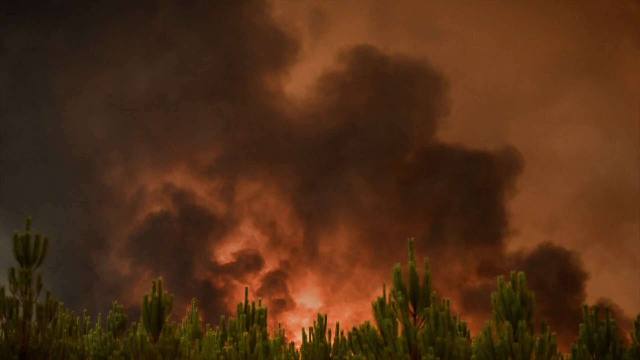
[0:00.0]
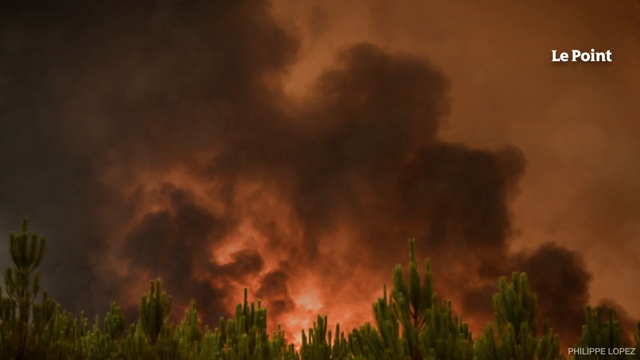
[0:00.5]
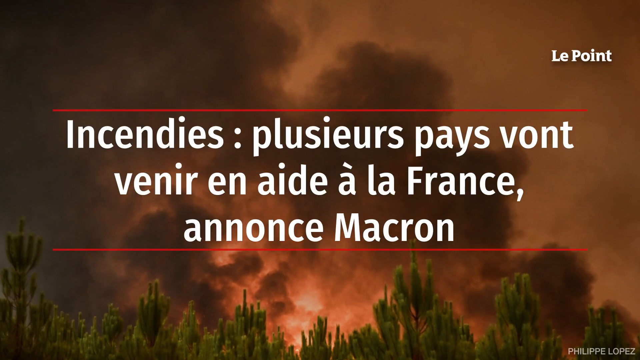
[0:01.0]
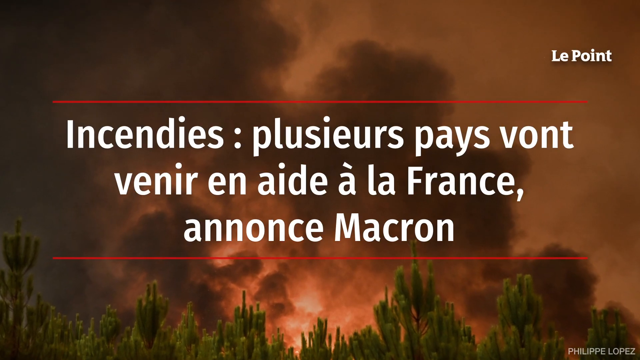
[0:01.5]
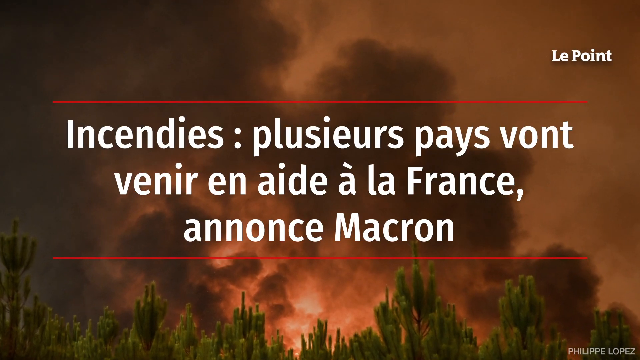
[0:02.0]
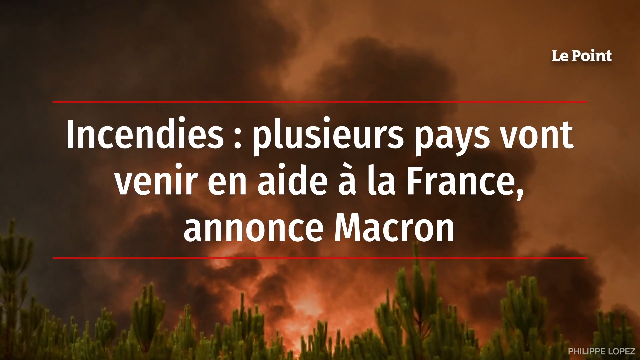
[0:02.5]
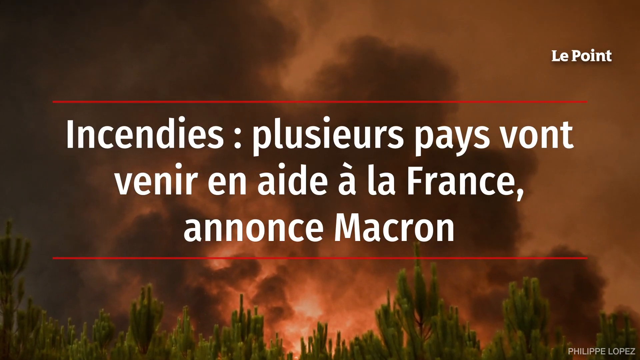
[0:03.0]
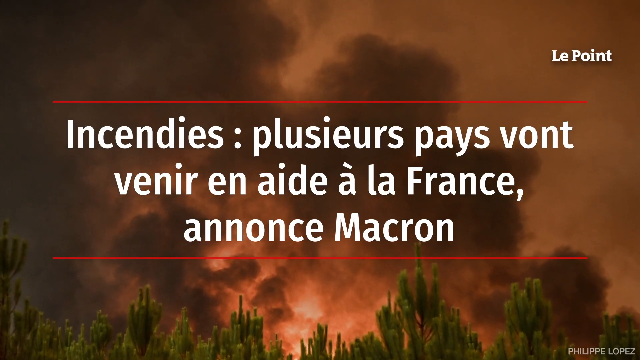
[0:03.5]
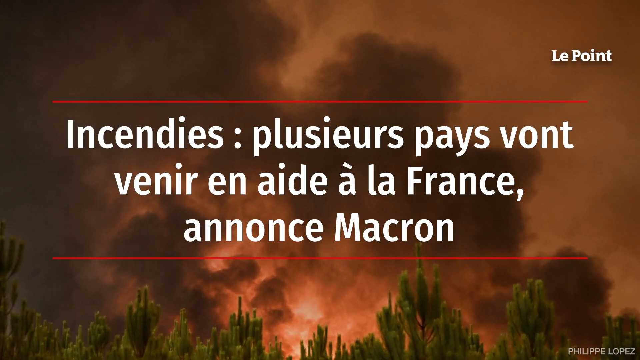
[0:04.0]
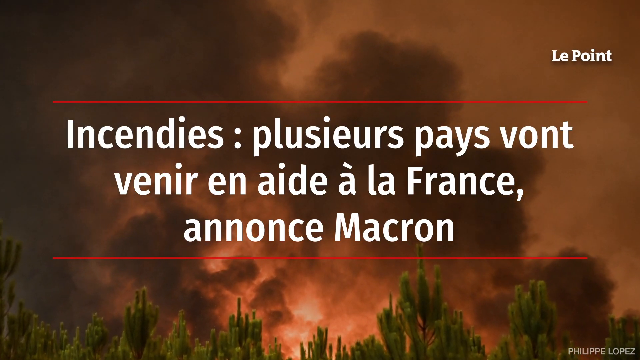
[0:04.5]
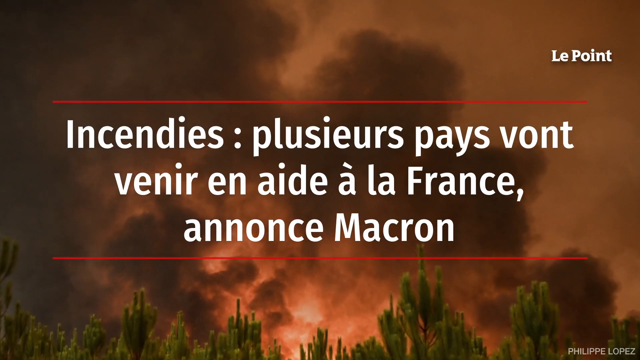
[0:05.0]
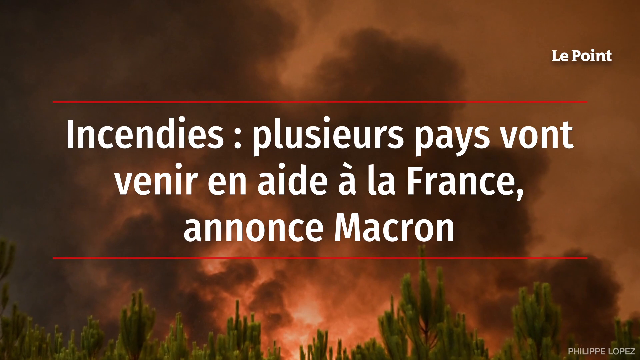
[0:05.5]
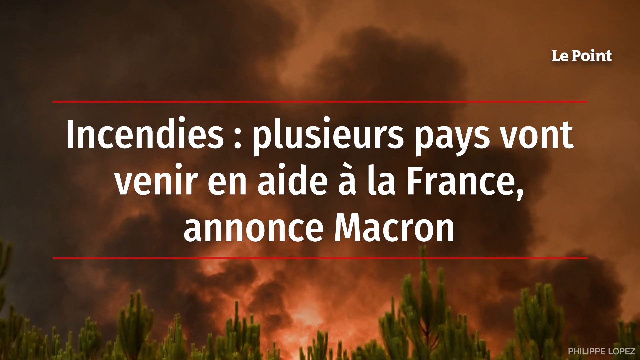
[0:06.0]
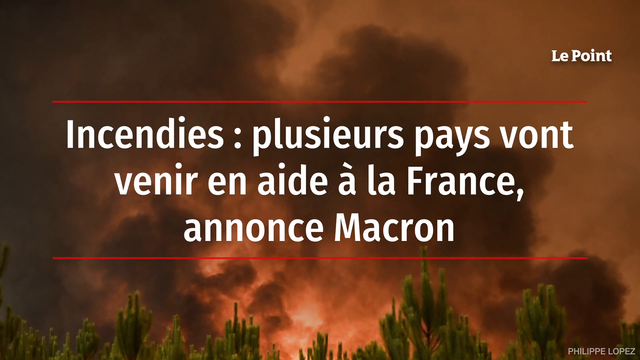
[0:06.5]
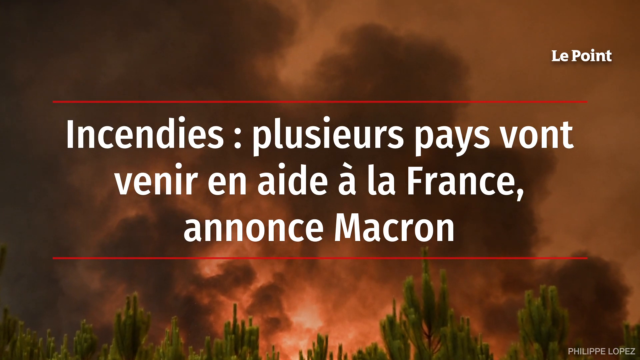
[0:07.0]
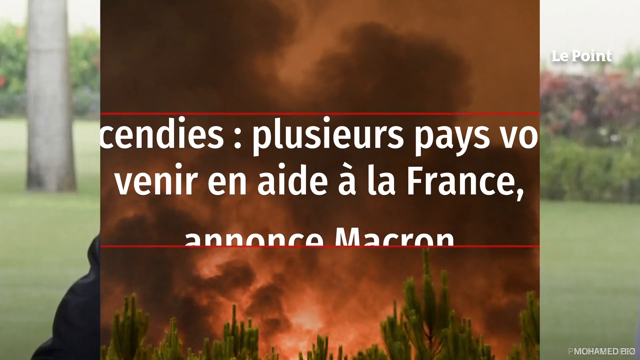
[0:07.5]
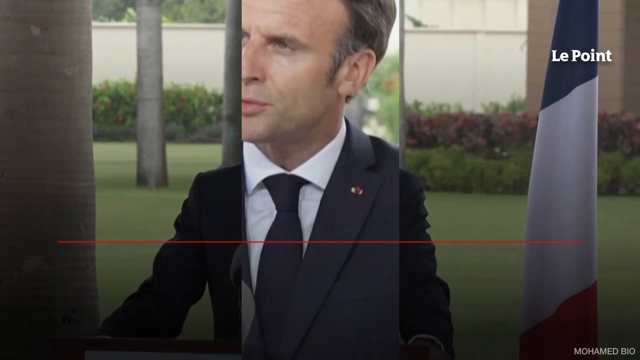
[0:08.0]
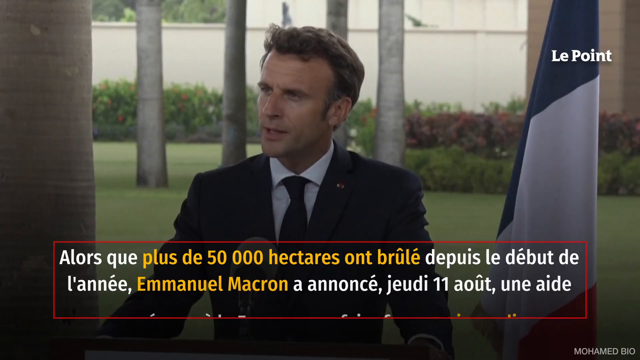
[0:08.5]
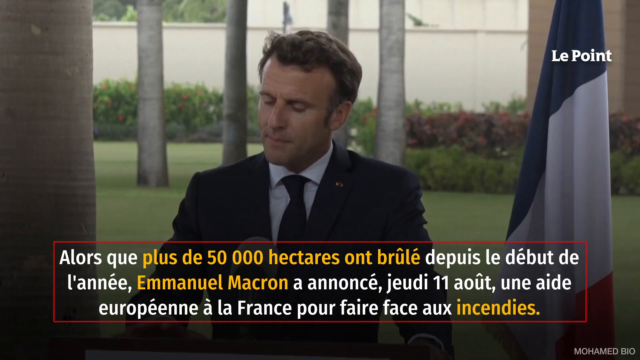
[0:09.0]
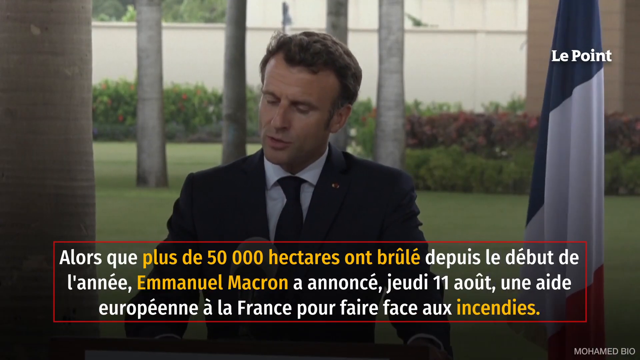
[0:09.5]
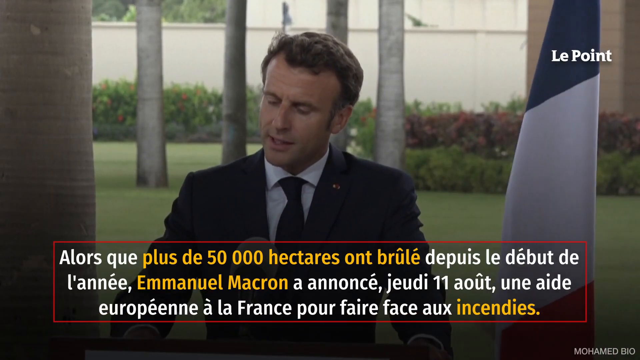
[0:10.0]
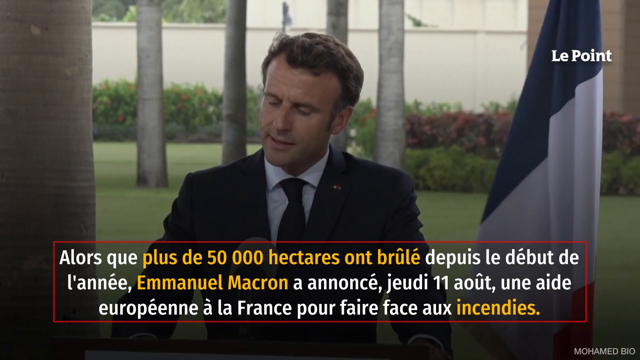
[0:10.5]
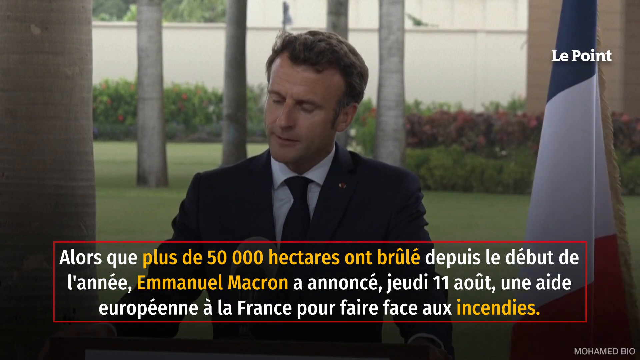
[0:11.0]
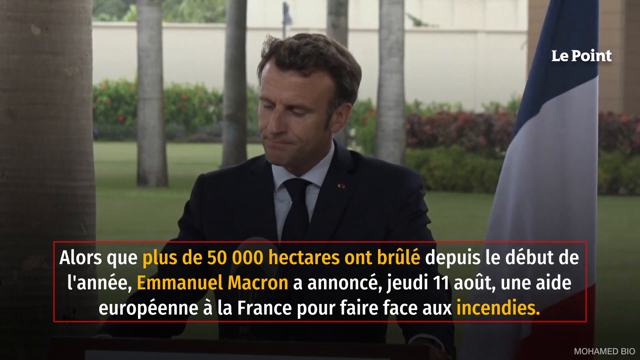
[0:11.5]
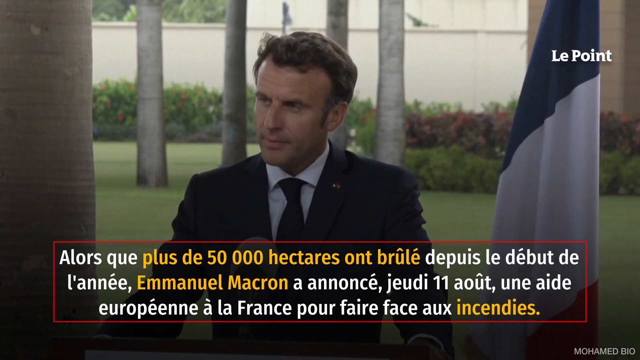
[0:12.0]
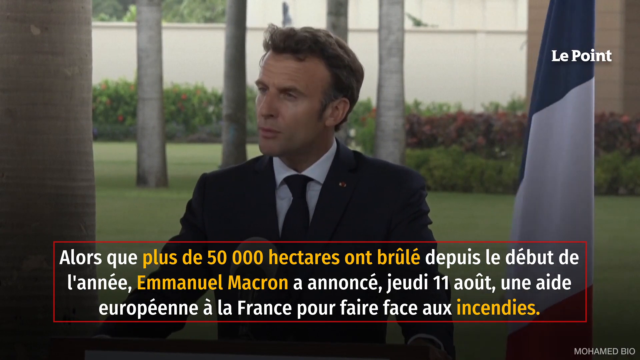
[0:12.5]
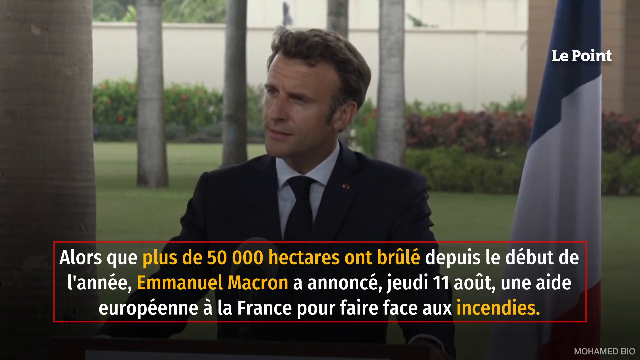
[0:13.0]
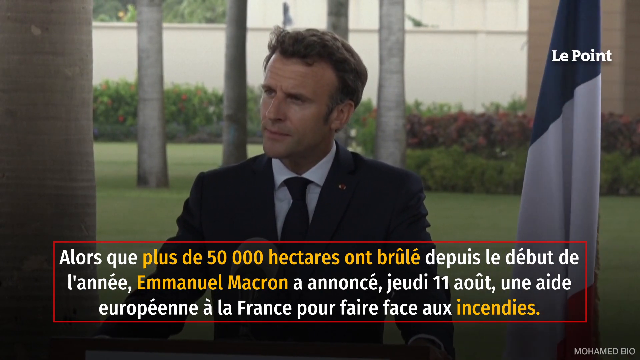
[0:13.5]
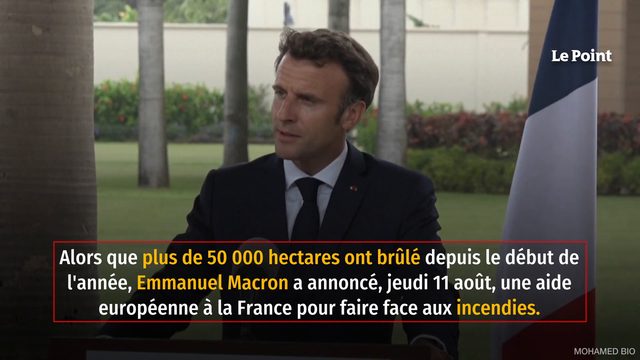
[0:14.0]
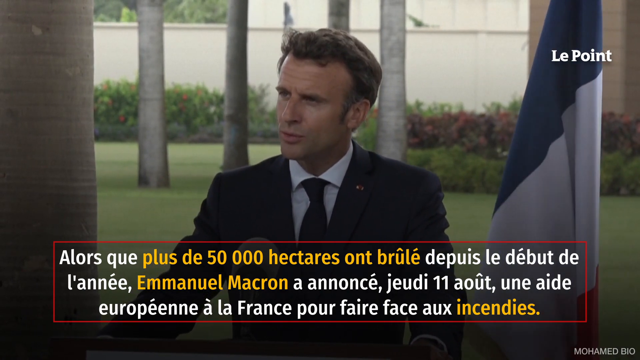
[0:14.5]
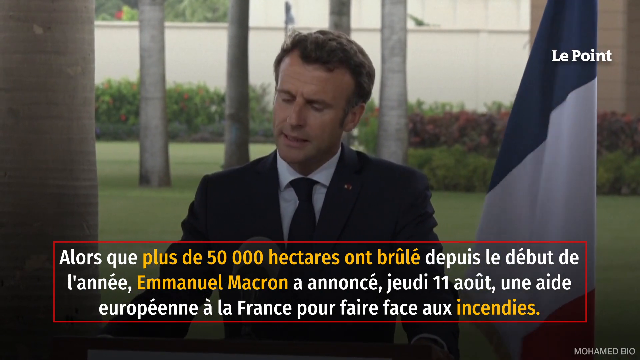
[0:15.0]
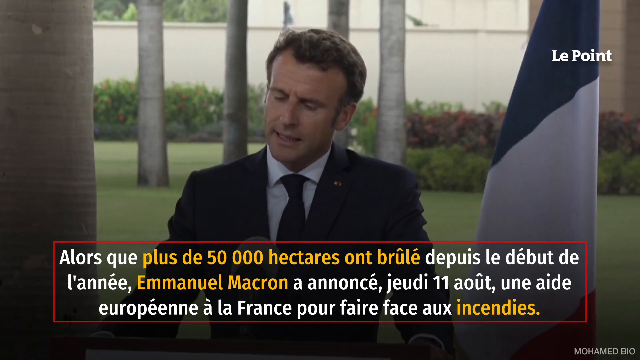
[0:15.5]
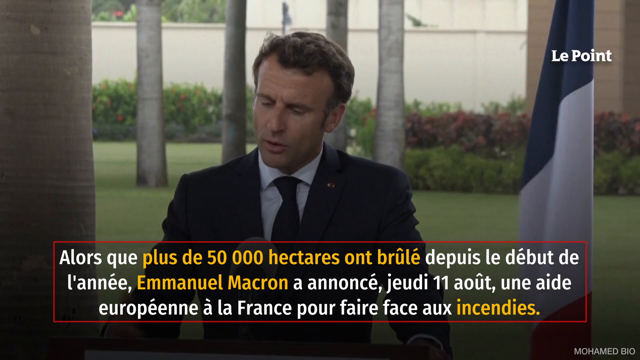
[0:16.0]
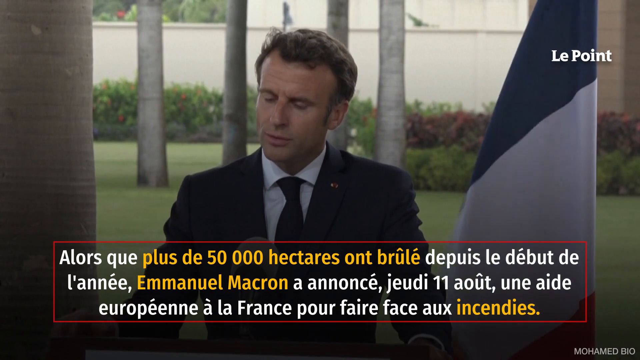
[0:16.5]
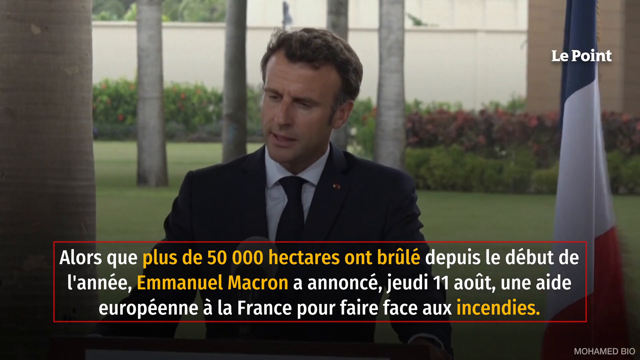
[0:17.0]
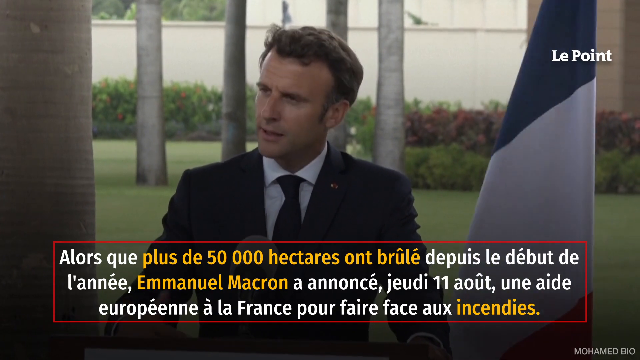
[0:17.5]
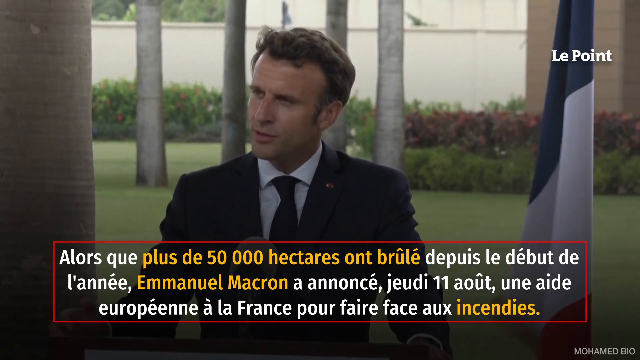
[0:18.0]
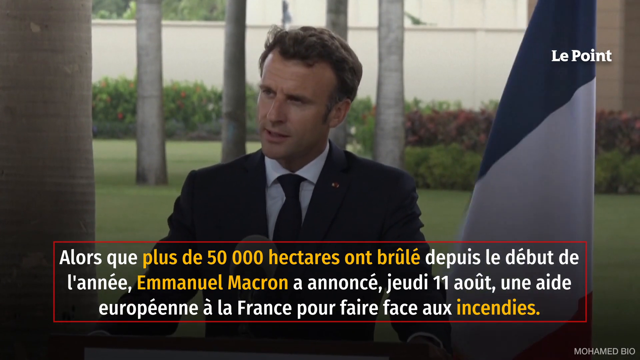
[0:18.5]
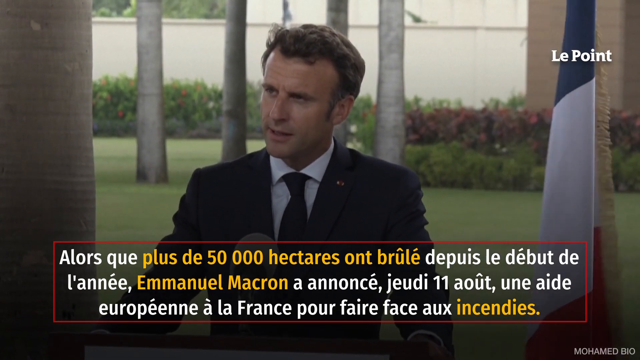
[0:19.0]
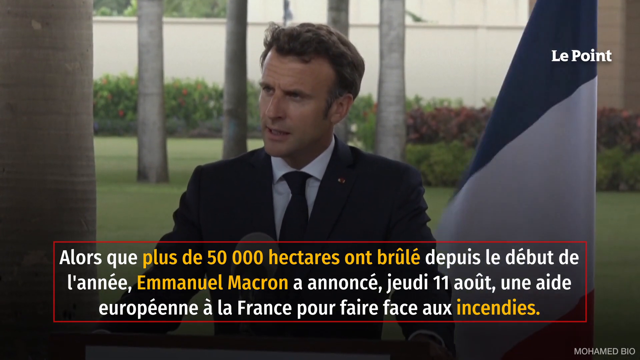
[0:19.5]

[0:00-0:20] This is news-style coverage presented by Le Point. It opens with a photo of an outdoor area with fire and large smoke, apparently showing some sort of wildfire breakout in the area. Text on the screen is in French; it is unclear what it says, but the word "France" can be made out. After the photo of the wildfire, the video cuts to a news briefing with one man in the shot. He is a middle-aged, well-groomed white man with sandy blonde and gray hair, wearing a suit, and appears to hold a government position. He is standing in an outdoor park area with a well-groomed landscape, apparently talking to reporters, with a very concerned look on his face. More text appears at the bottom of this portion, in which the words "50,000" and the name "Emmanuel Macron" can be made out.